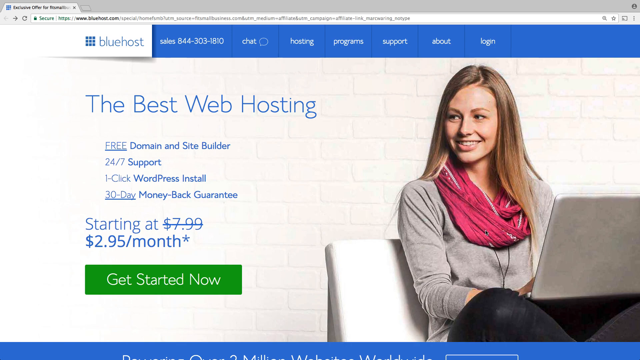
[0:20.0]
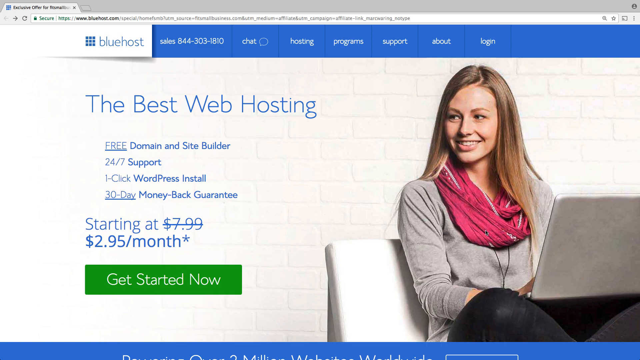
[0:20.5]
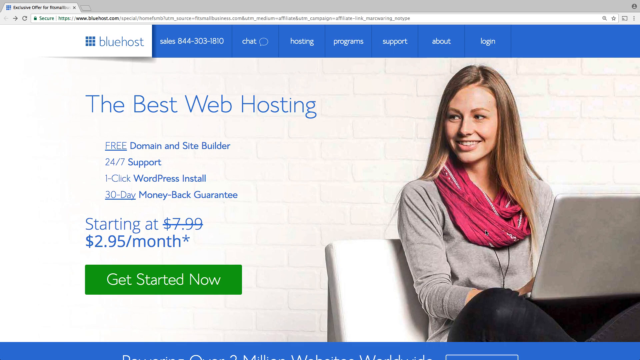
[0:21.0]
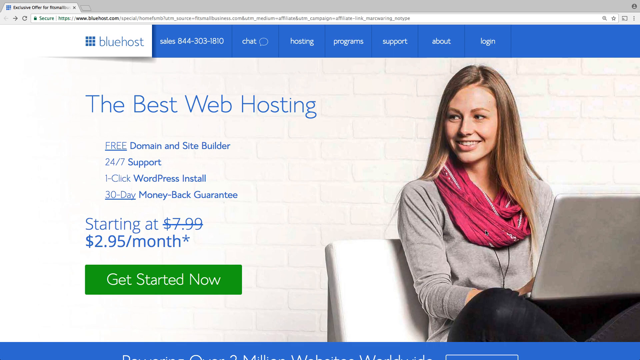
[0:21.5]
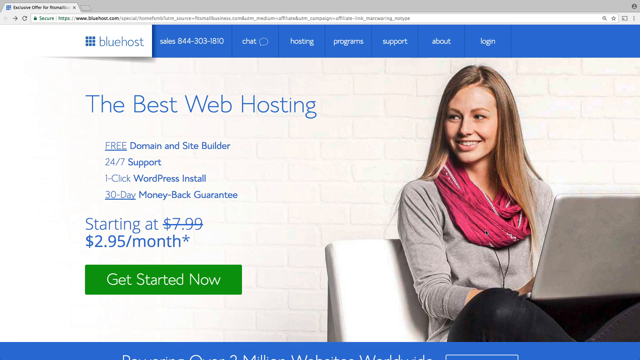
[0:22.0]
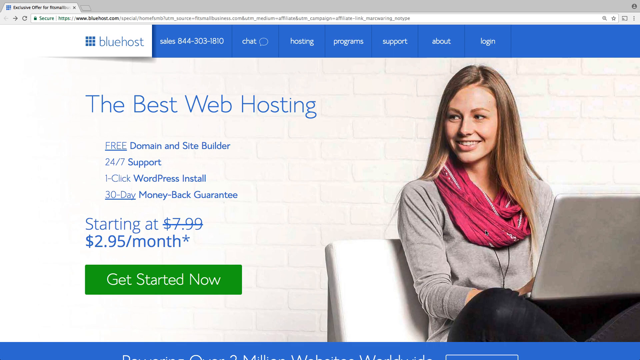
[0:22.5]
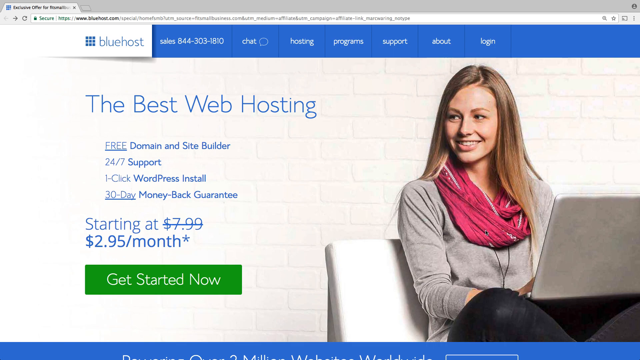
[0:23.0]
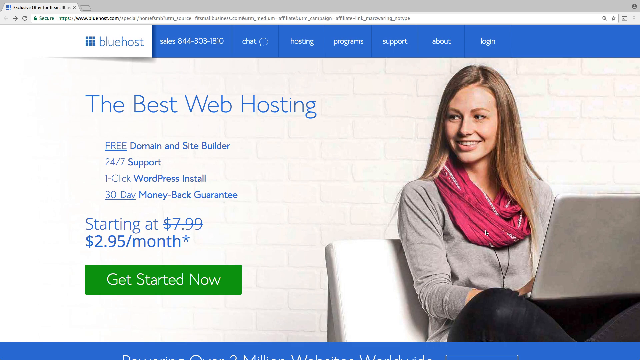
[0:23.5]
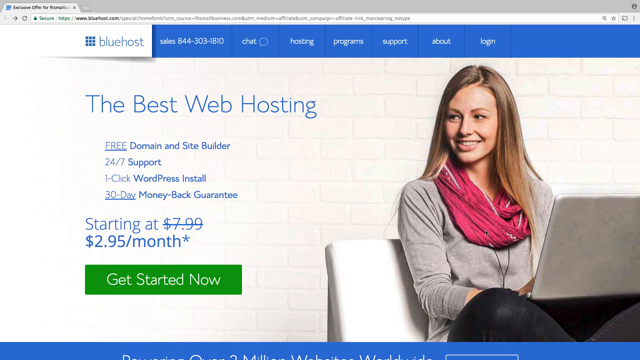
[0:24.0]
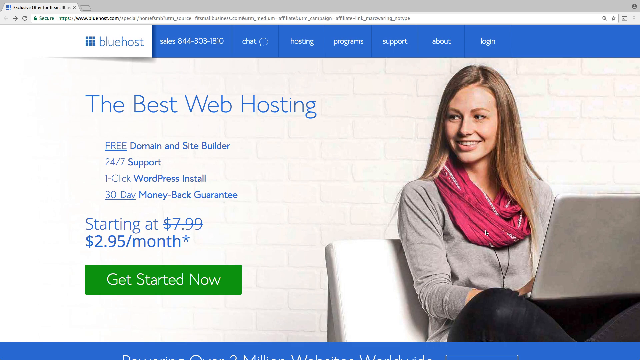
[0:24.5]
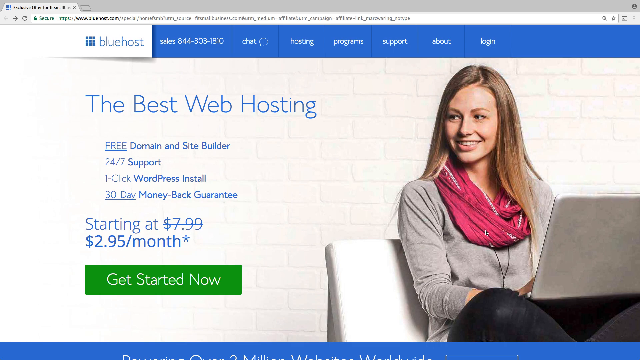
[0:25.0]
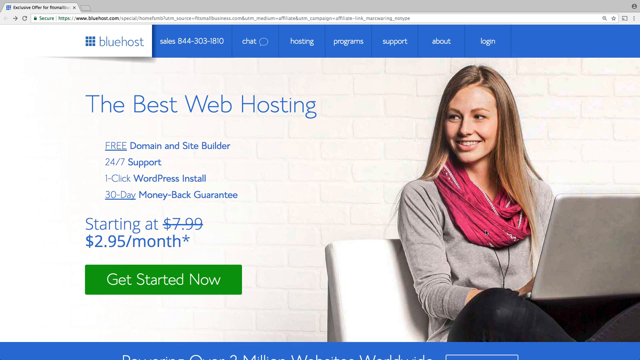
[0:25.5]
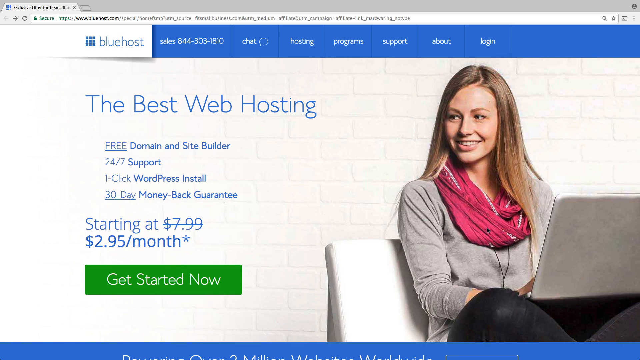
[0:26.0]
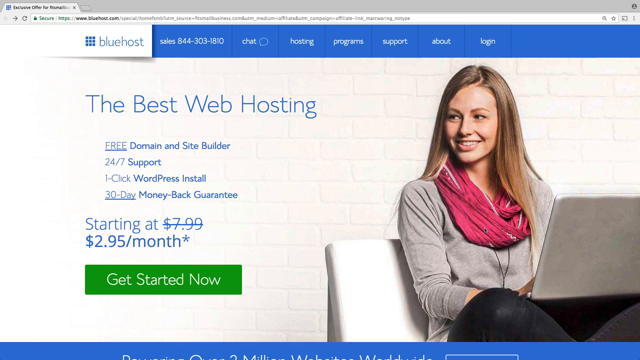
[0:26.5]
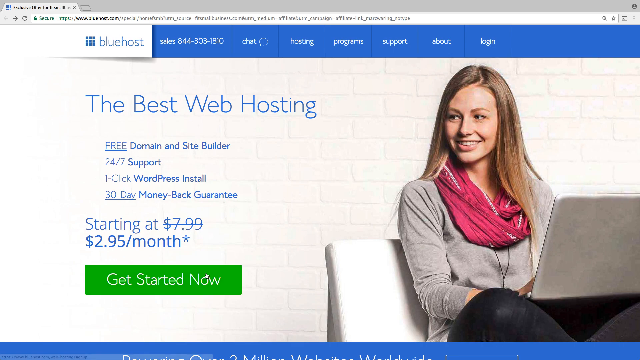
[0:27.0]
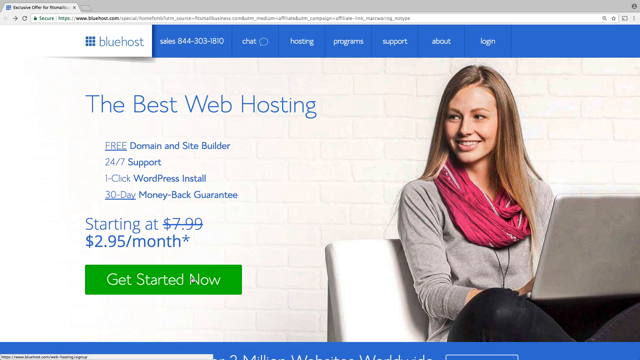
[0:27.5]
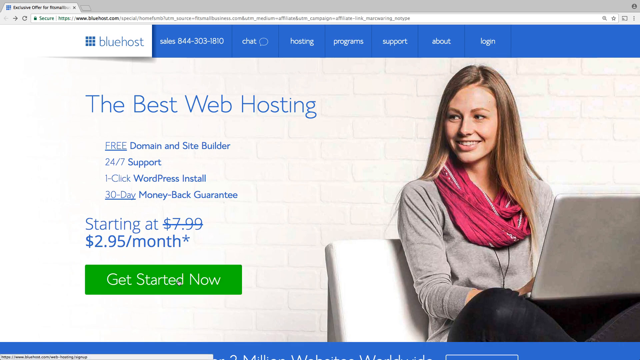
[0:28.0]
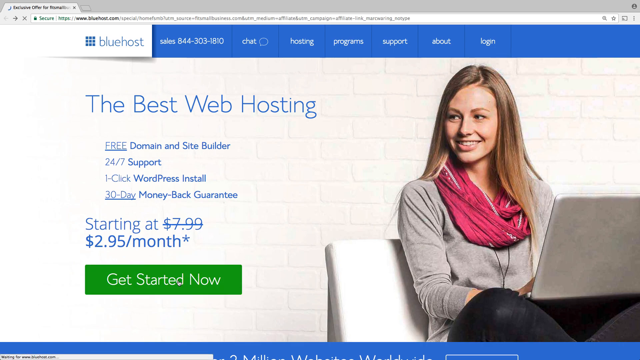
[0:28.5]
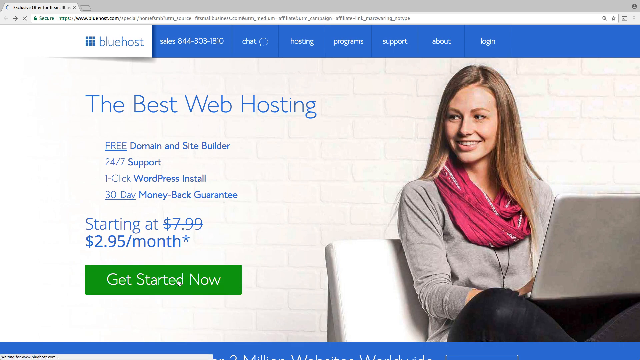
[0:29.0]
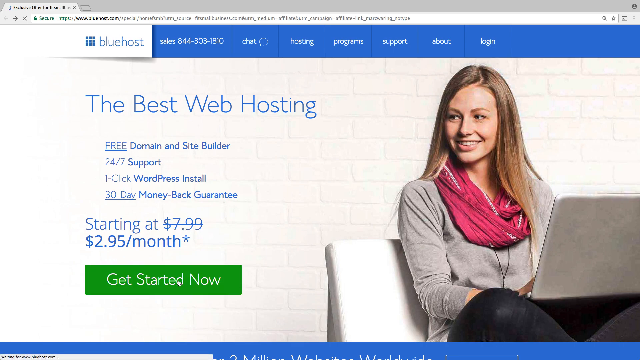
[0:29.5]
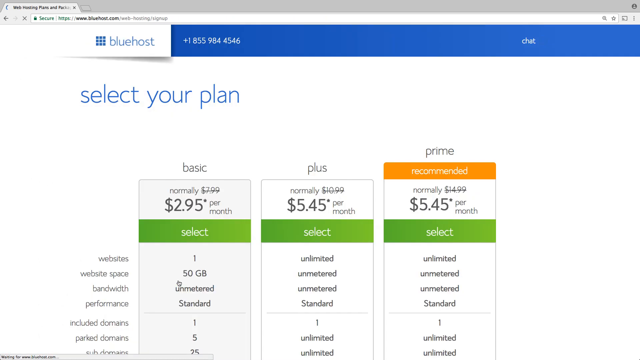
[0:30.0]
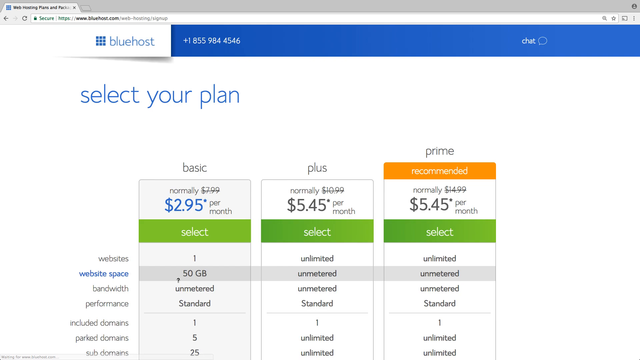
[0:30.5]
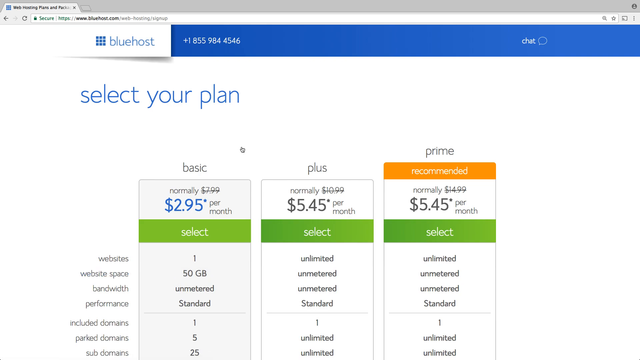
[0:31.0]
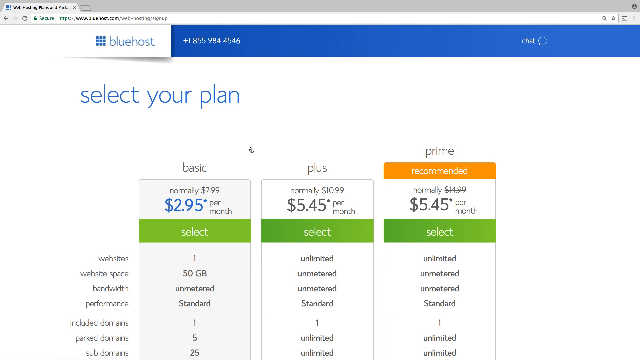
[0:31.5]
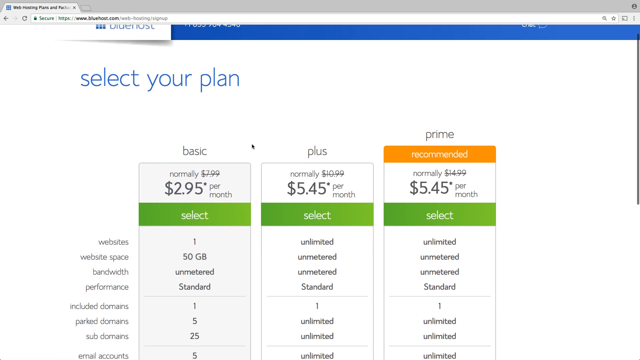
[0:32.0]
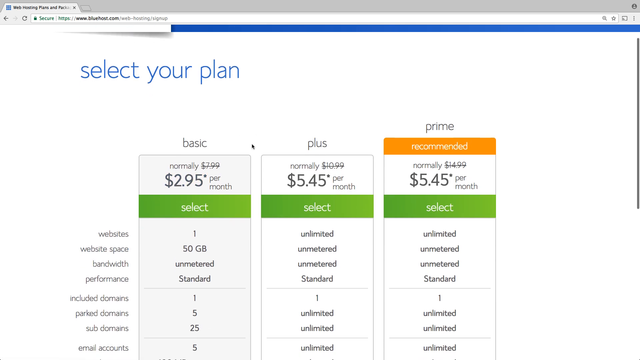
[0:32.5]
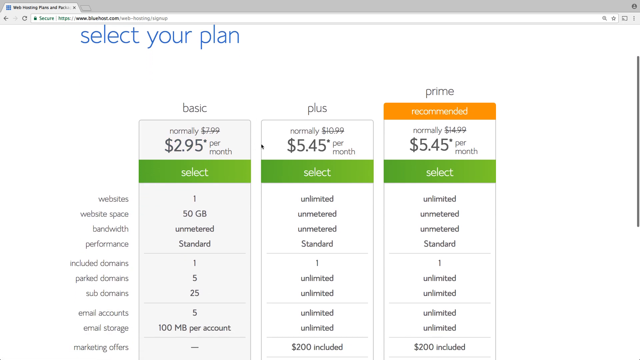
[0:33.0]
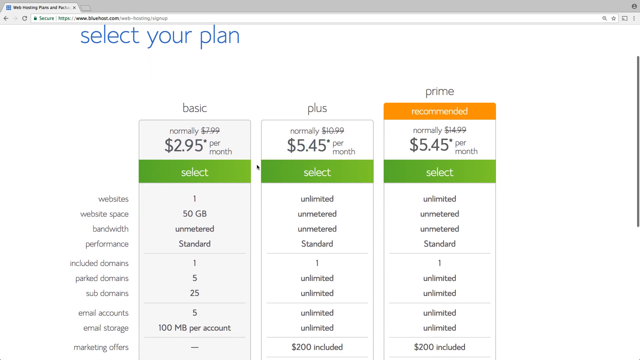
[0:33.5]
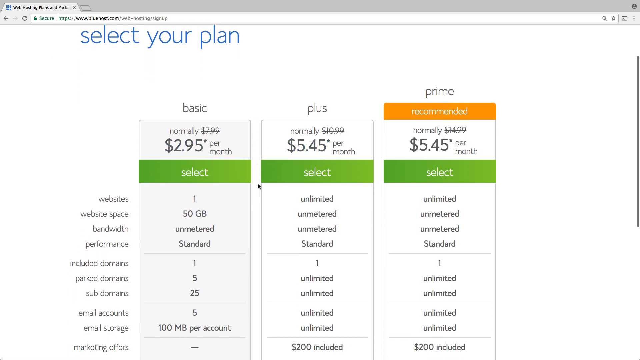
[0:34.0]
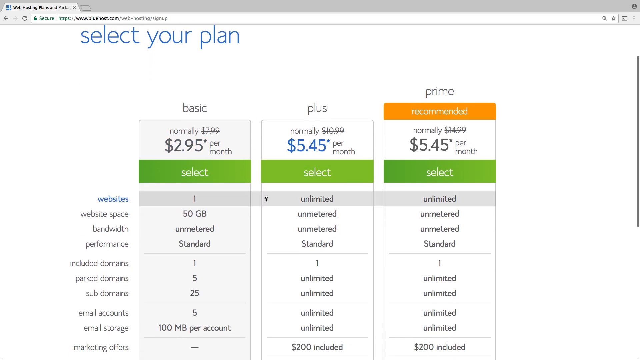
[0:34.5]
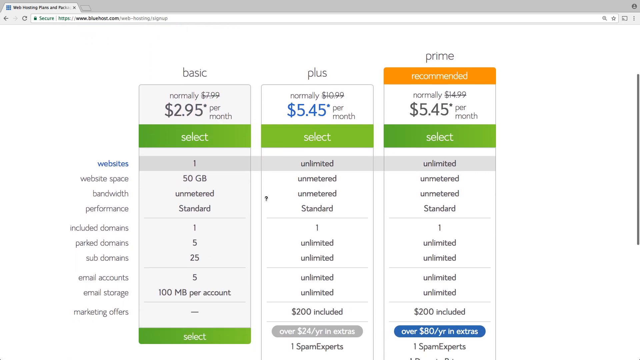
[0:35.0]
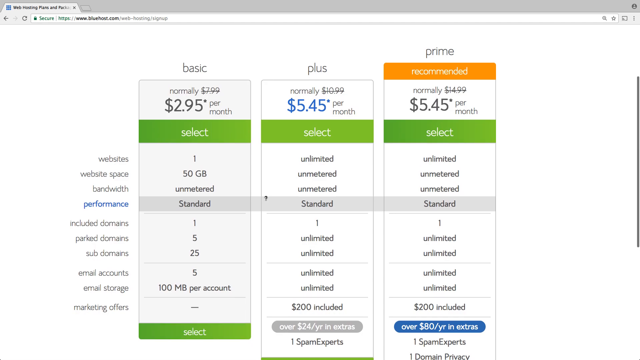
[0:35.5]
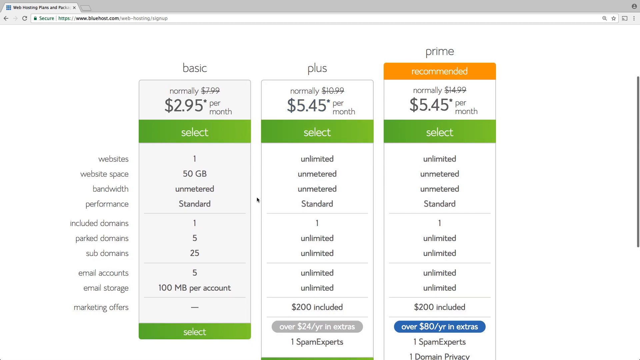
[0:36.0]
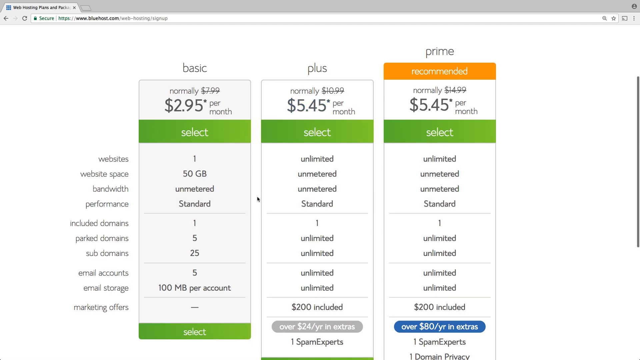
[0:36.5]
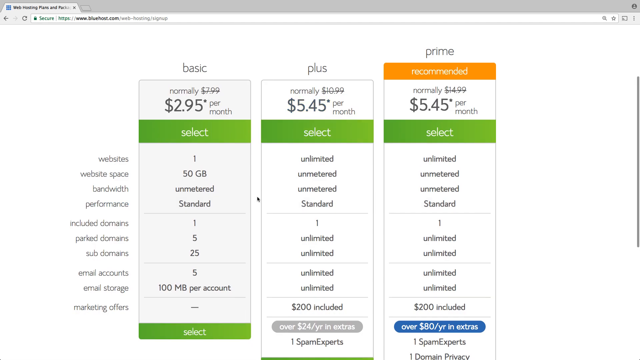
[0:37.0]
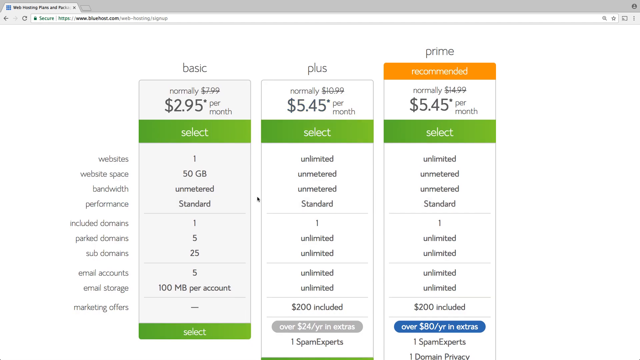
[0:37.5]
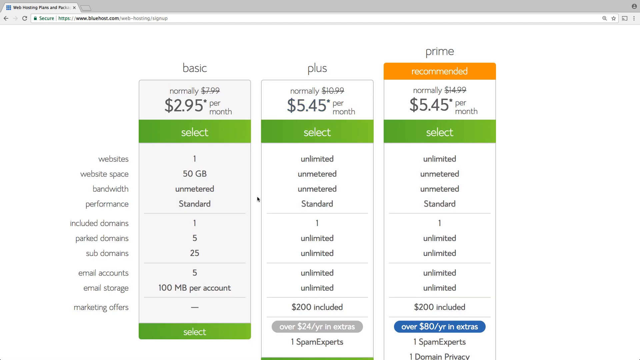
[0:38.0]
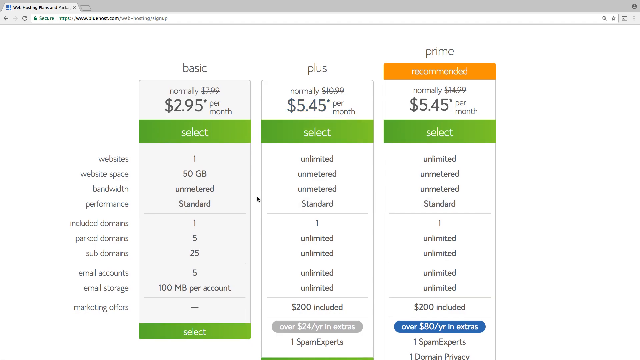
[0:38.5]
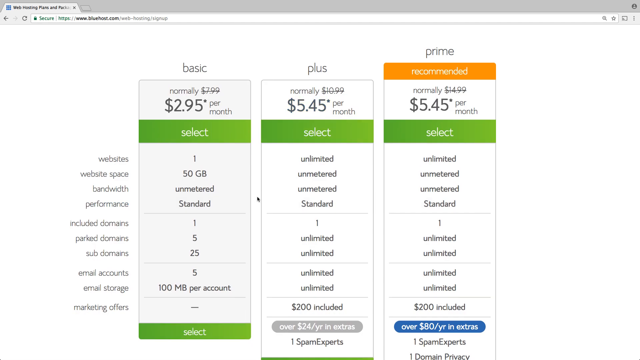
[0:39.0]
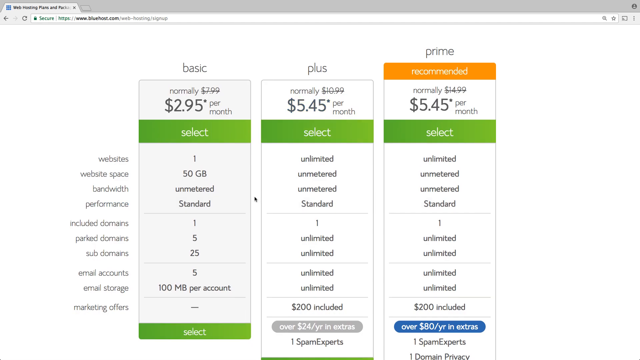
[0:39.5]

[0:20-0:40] The ad apparently promotes a web hosting site, offering a free domain and site builder, 24/7 support, a one-click WordPress install, and a ten-day money-back guarantee. A starting price of $7.99 is scratched out and replaced with $2.95 a month, alongside the text "get started now". The website is called Bluehost. A young woman with very long hair, wearing a gray sweater, sits on a couch in front of a laptop, sort of smiling and maybe looking off to her right. The site lists several plans: a basic plan with 50 gigabytes of unmetered standard service, a plus plan at $5.45 a month that is unlimited, and a prime plan, also $5.45 a month, apparently completely unlimited.